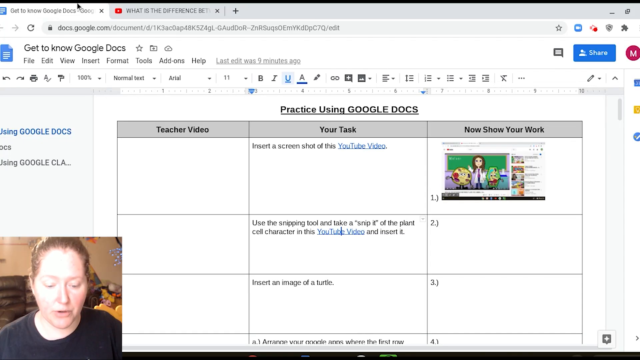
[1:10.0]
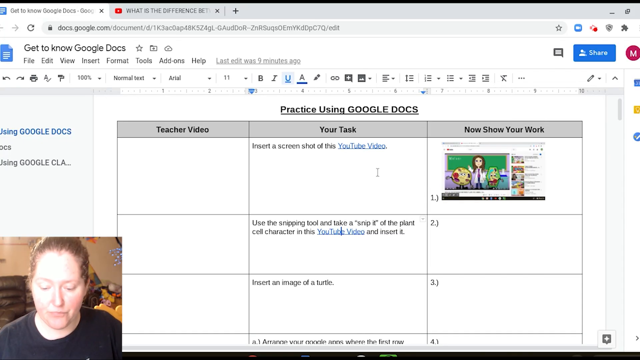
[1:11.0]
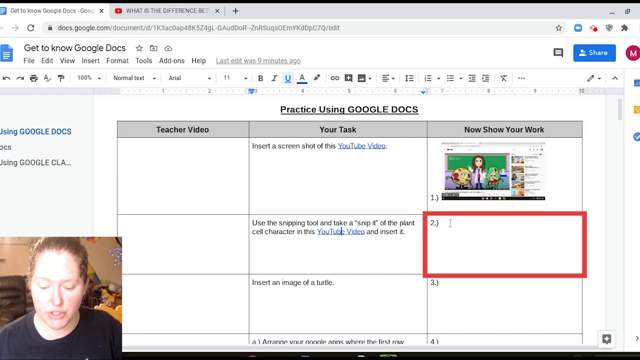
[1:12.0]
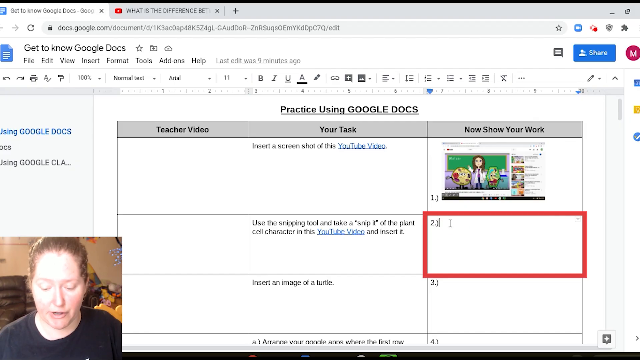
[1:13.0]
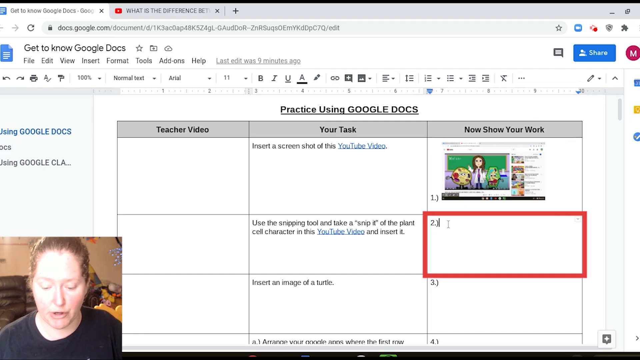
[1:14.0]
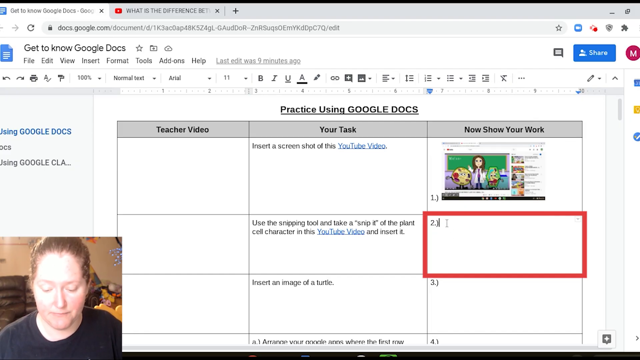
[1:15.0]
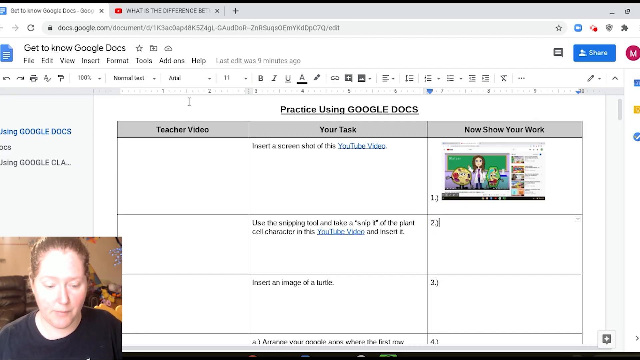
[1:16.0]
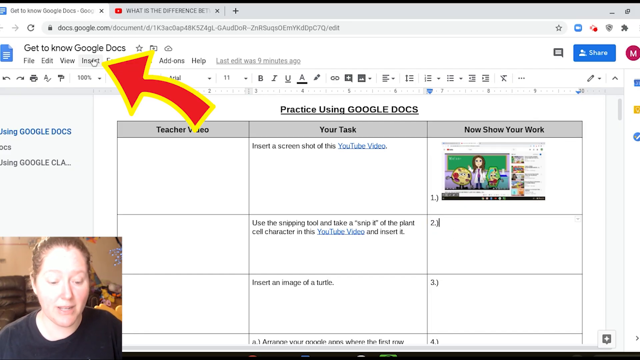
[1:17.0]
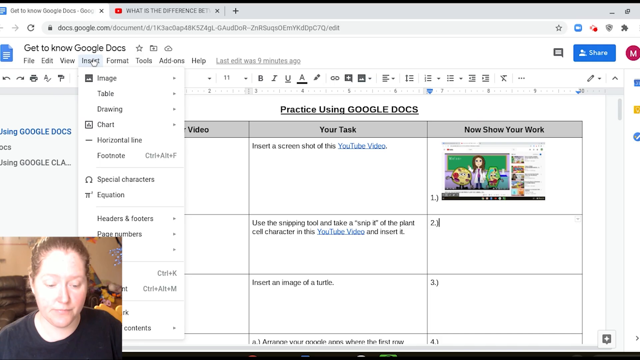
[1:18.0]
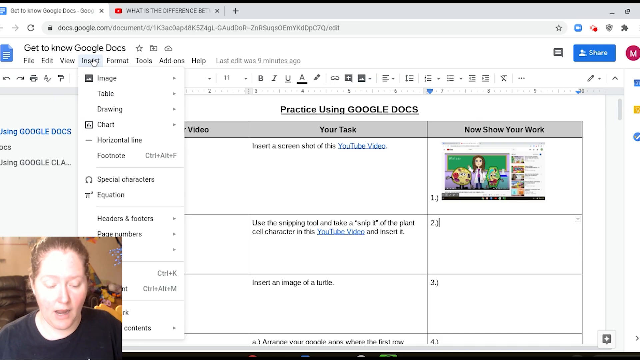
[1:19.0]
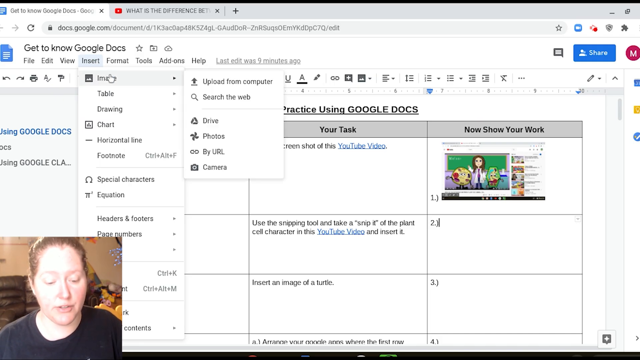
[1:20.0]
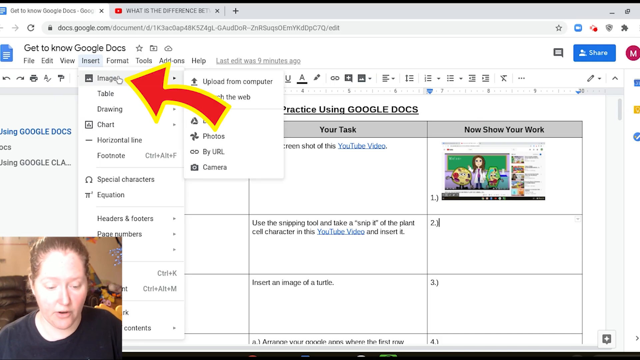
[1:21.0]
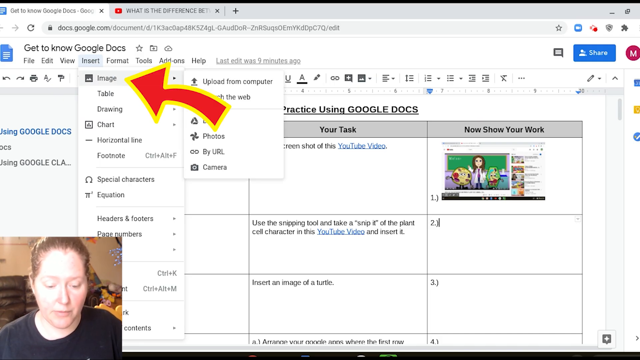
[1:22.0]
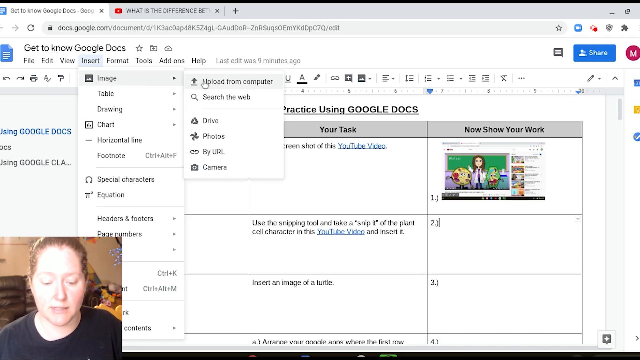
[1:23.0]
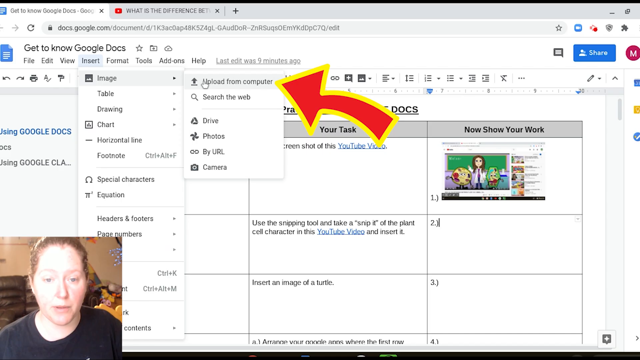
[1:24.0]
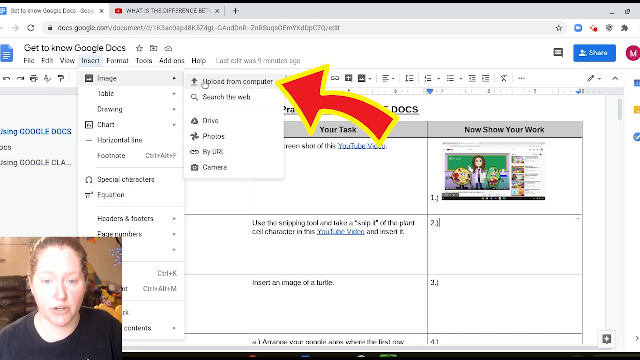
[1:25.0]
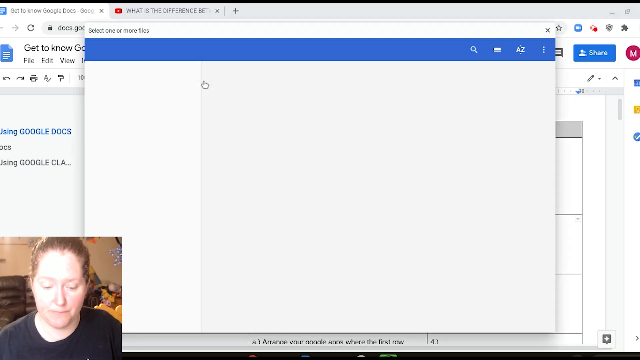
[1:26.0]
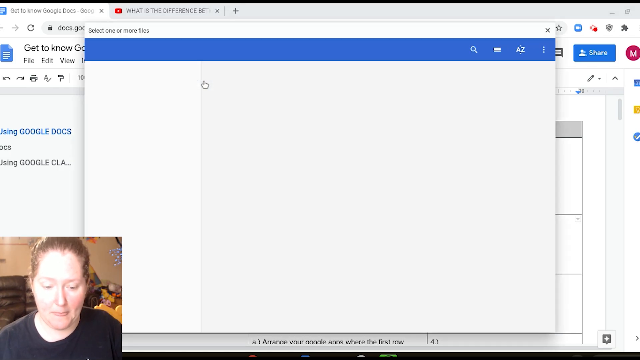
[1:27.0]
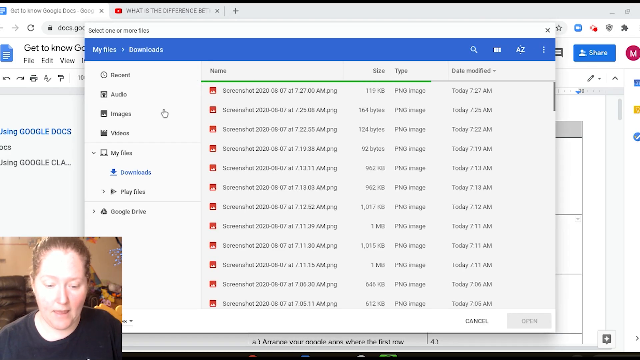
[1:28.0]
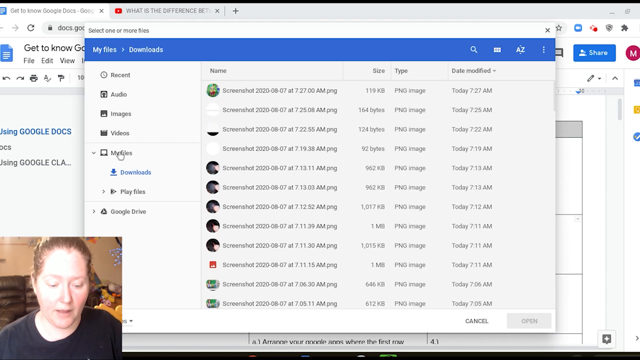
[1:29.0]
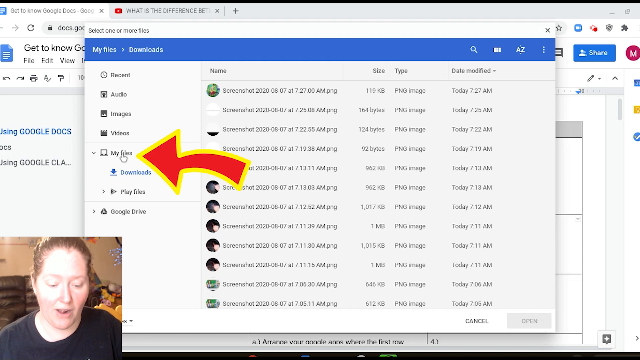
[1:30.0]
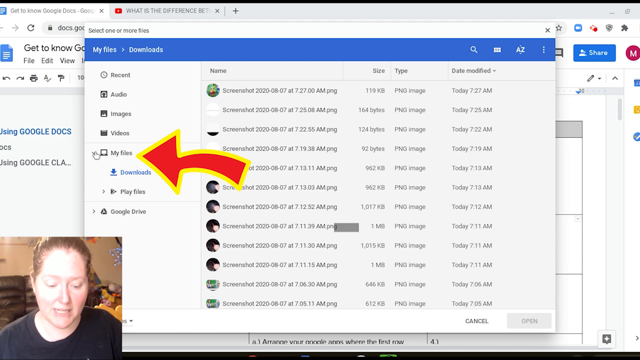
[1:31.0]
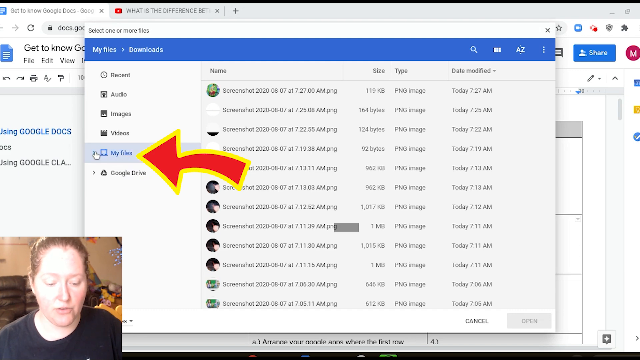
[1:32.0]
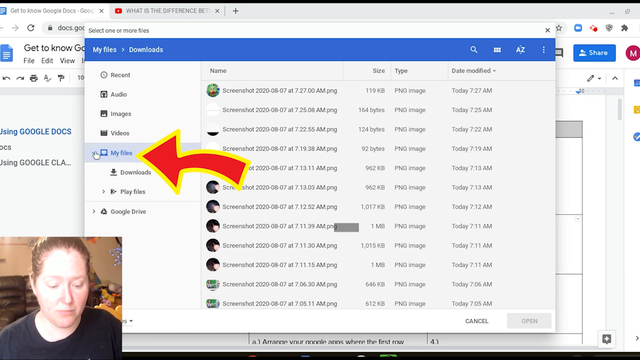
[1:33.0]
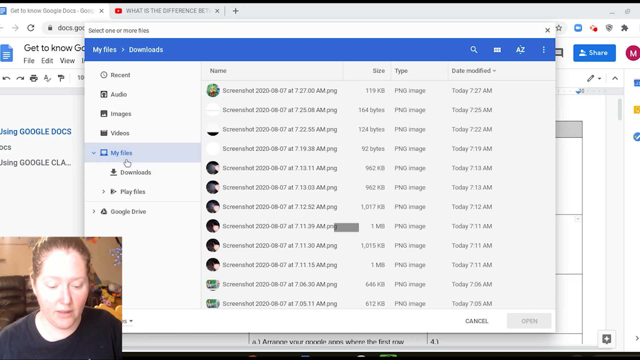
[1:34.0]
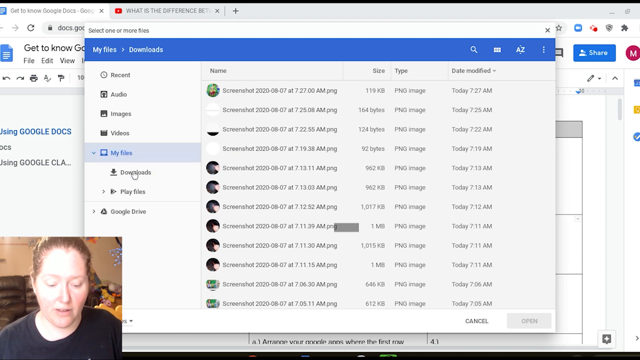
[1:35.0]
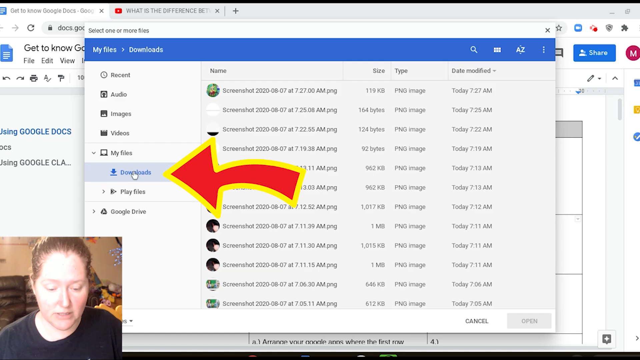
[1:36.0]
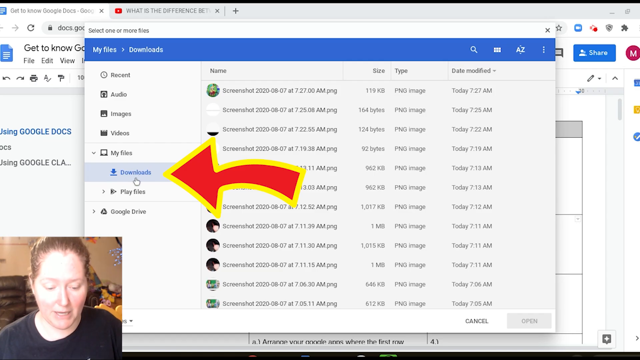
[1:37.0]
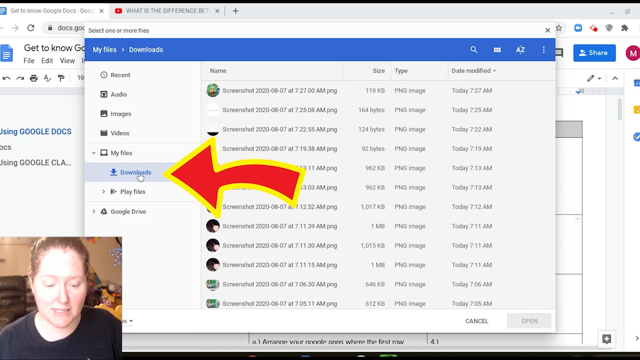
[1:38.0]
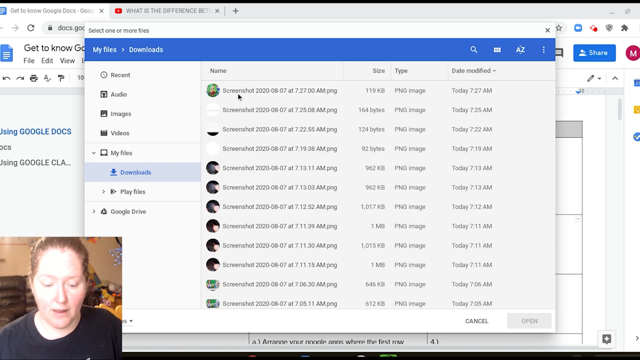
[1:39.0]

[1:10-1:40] She possibly begins putting the screenshot into the third column of the second row. She hovers over insert in Google Docs, goes to her files, and scrolls down to her downloads, clicking on what is apparently the latest file. She clicks on the box where she wants the screenshot, and she looks to be about to put it there, though it does not appear yet. It looks like sort of a step-by-step guide on taking screenshots and inserting pictures into Google Docs.